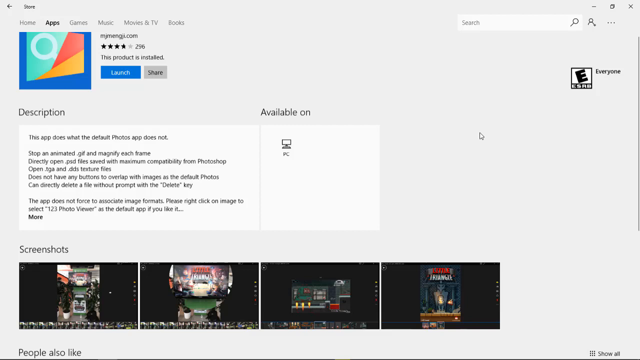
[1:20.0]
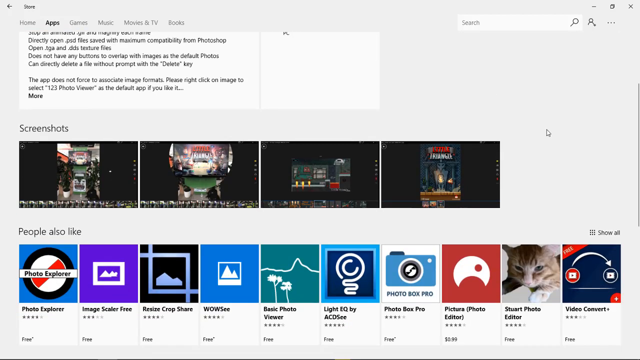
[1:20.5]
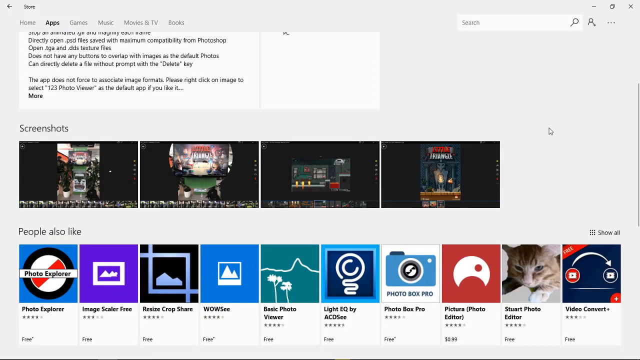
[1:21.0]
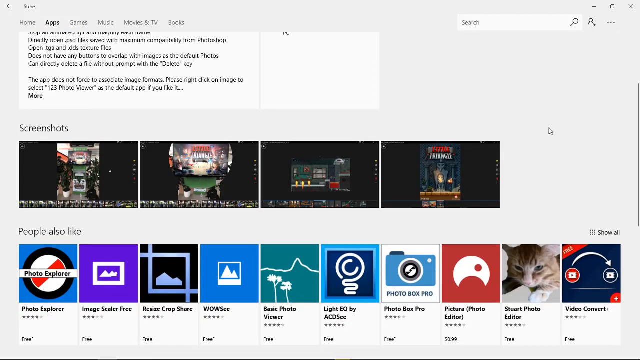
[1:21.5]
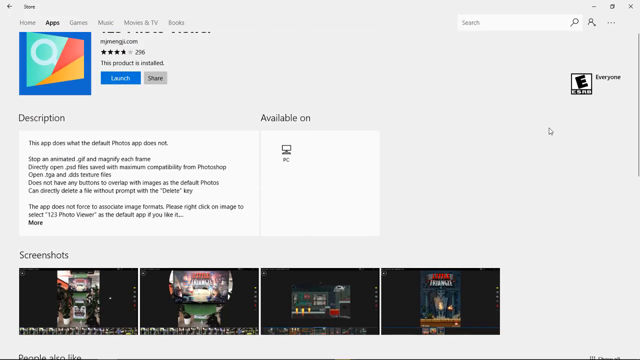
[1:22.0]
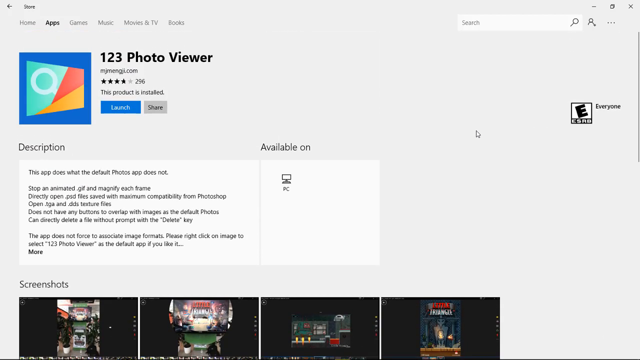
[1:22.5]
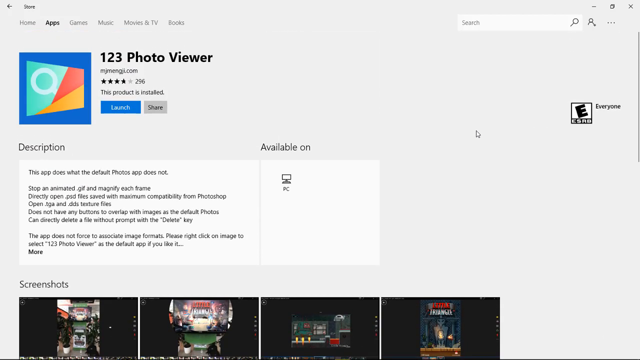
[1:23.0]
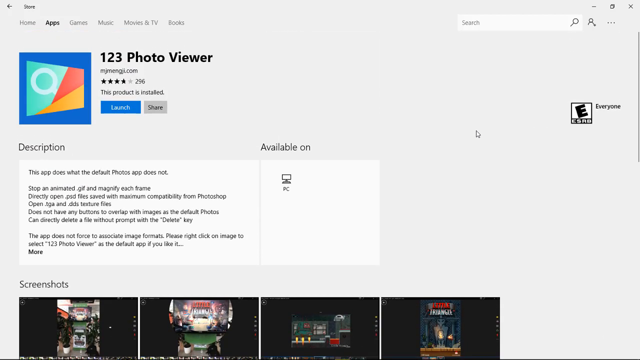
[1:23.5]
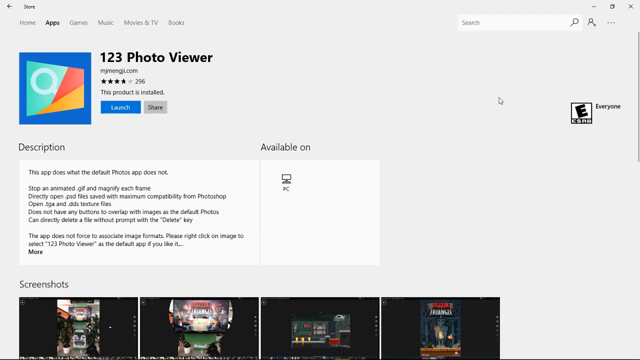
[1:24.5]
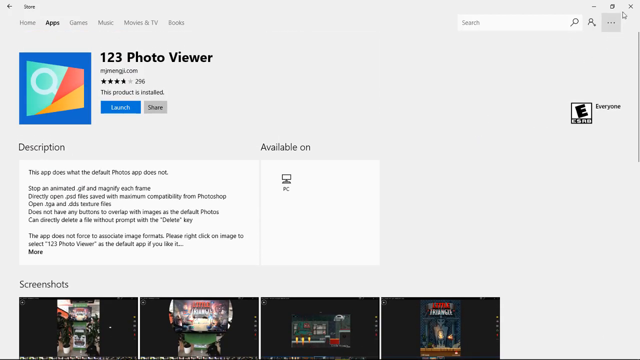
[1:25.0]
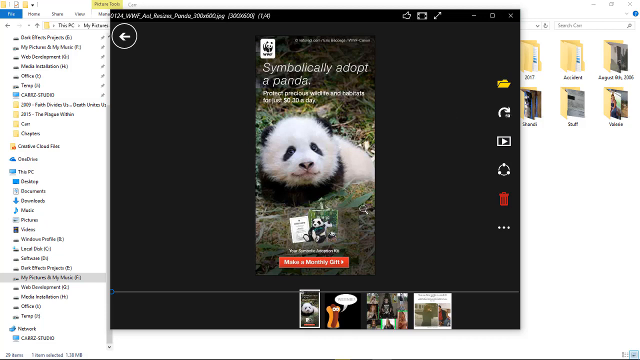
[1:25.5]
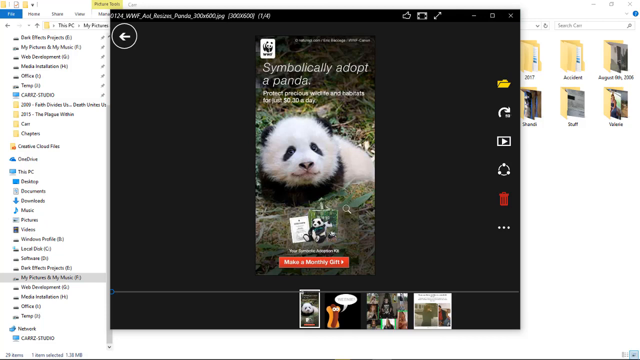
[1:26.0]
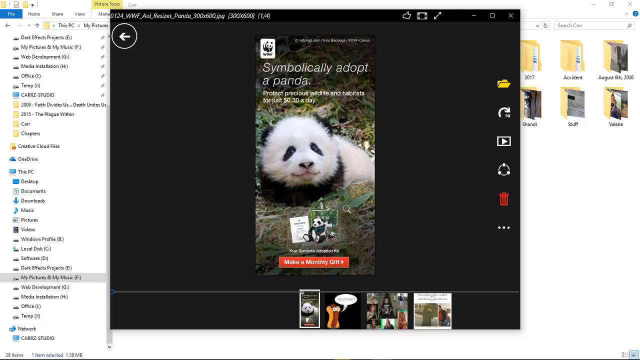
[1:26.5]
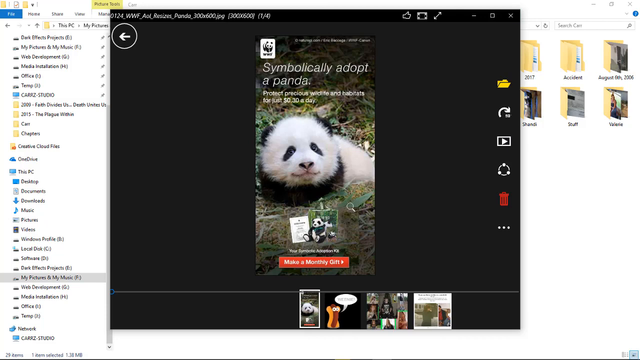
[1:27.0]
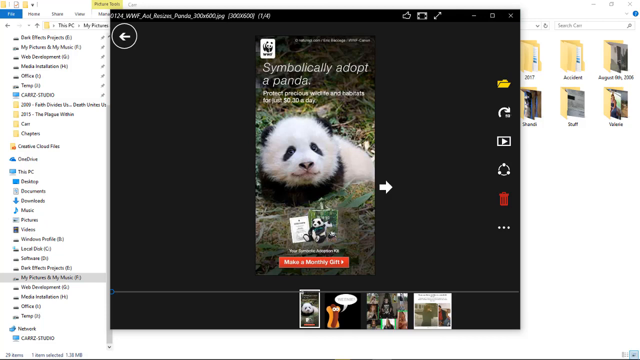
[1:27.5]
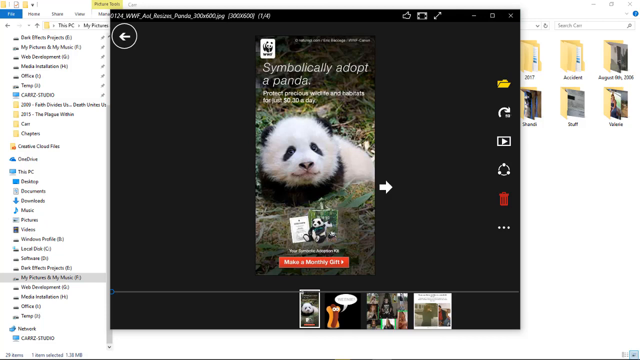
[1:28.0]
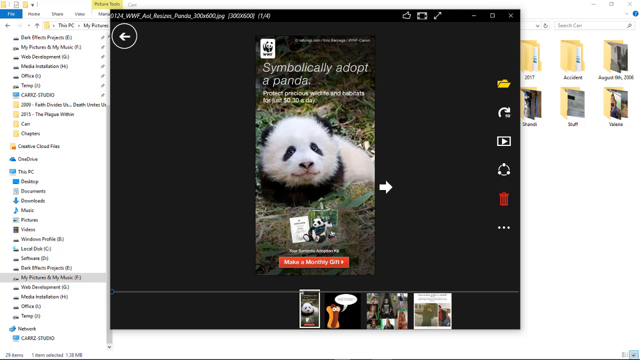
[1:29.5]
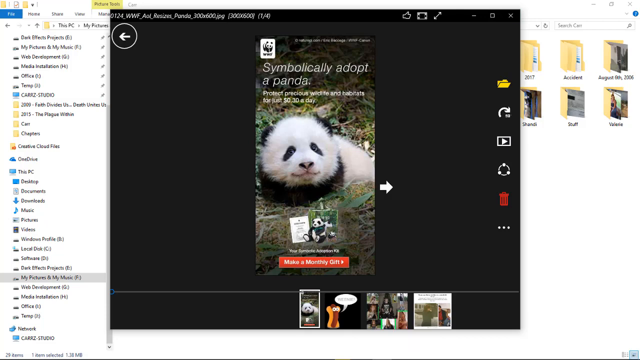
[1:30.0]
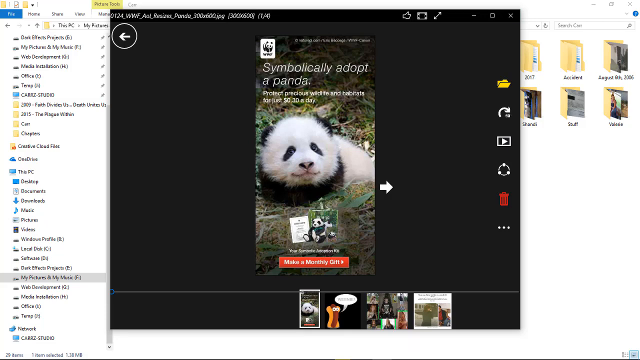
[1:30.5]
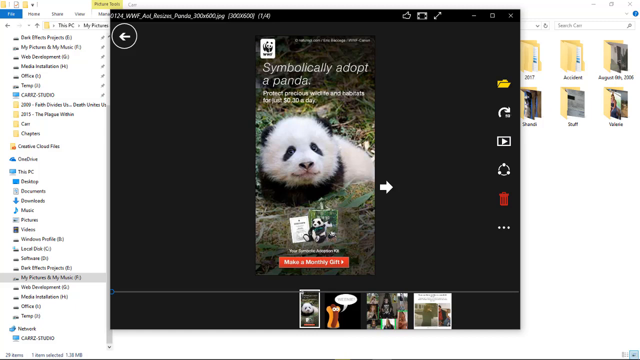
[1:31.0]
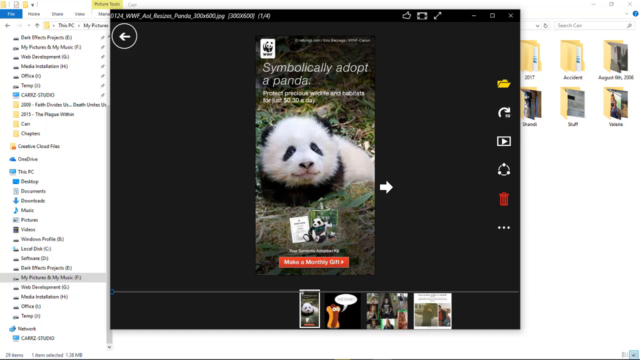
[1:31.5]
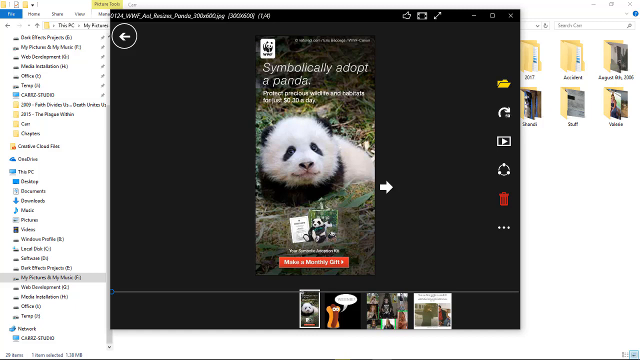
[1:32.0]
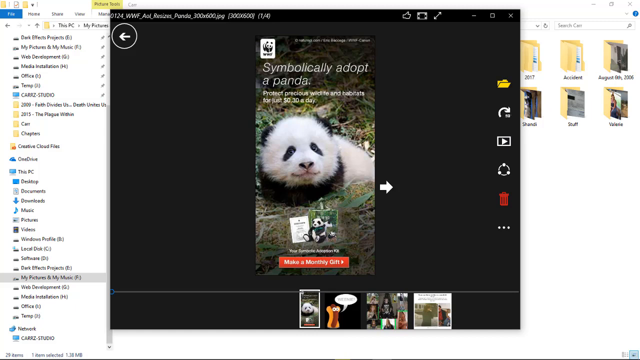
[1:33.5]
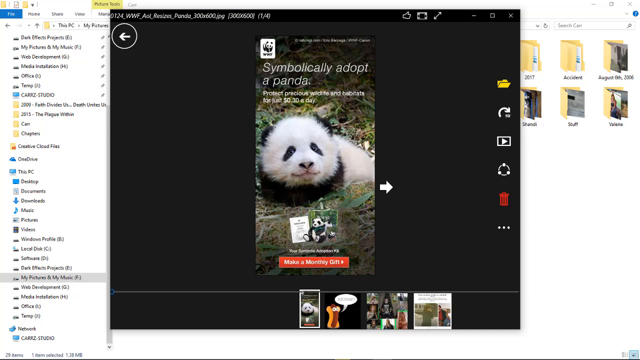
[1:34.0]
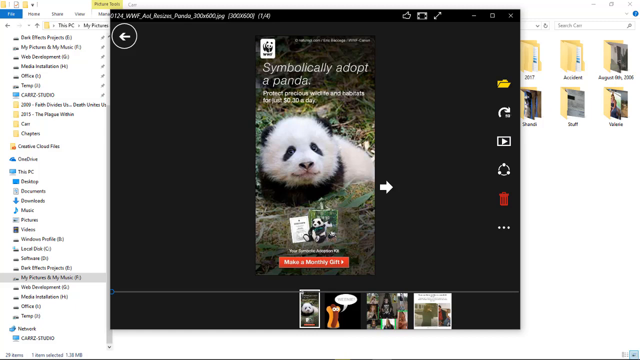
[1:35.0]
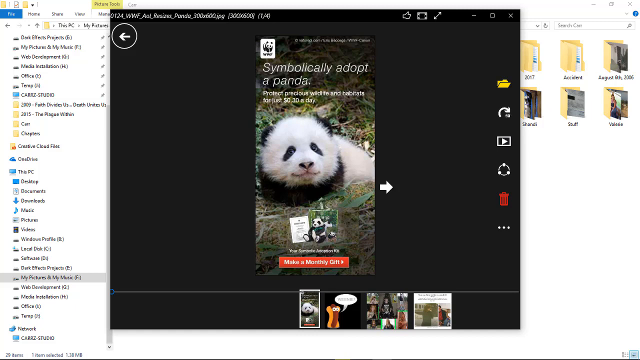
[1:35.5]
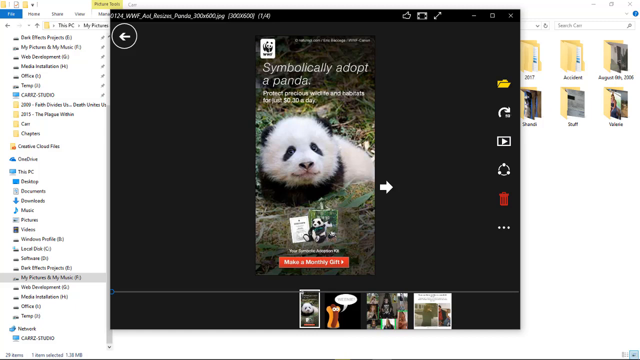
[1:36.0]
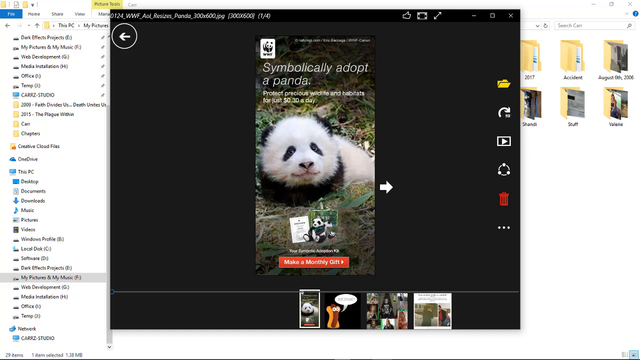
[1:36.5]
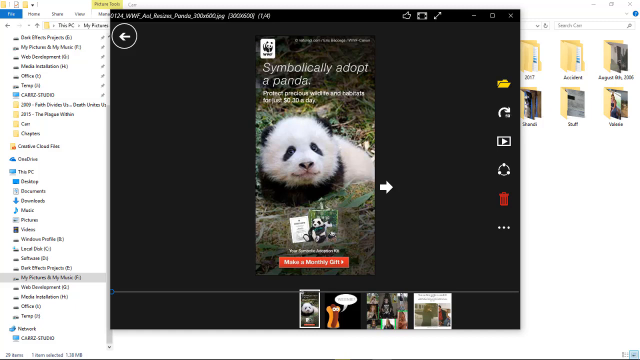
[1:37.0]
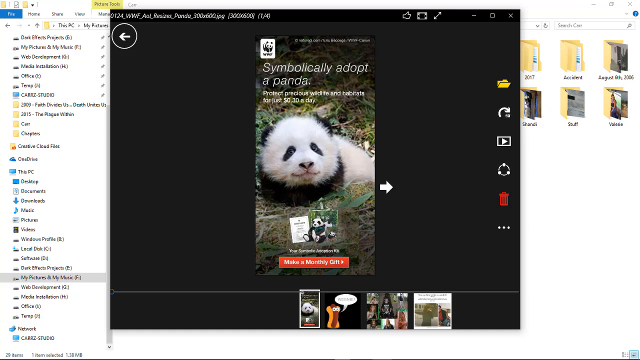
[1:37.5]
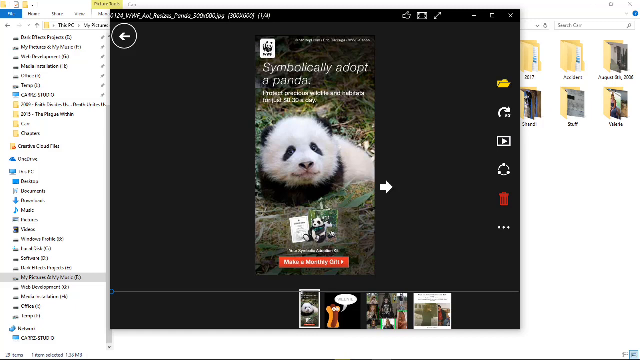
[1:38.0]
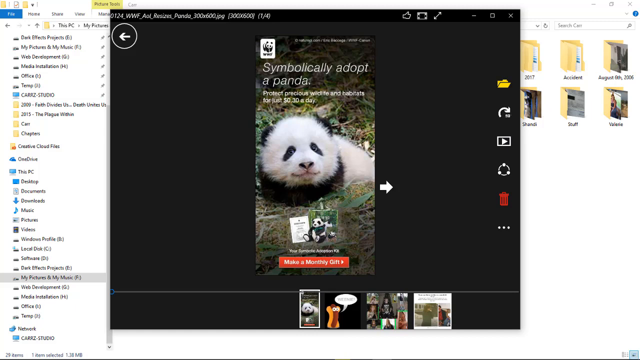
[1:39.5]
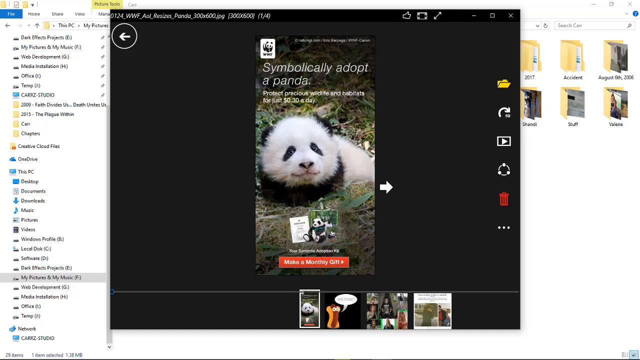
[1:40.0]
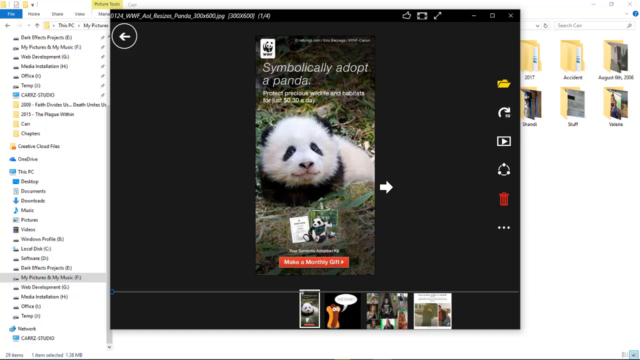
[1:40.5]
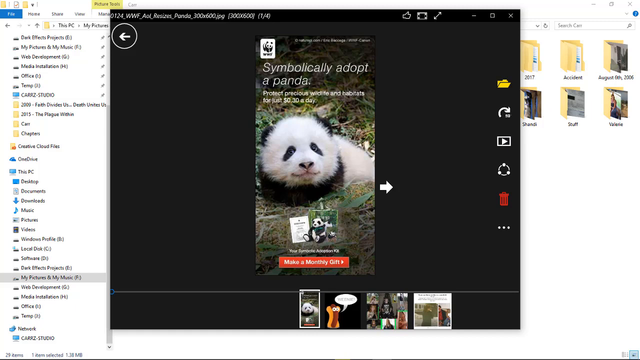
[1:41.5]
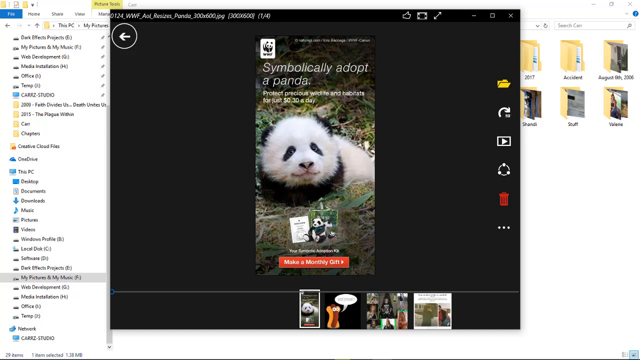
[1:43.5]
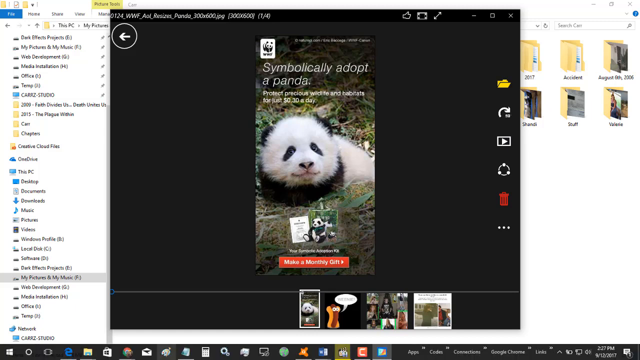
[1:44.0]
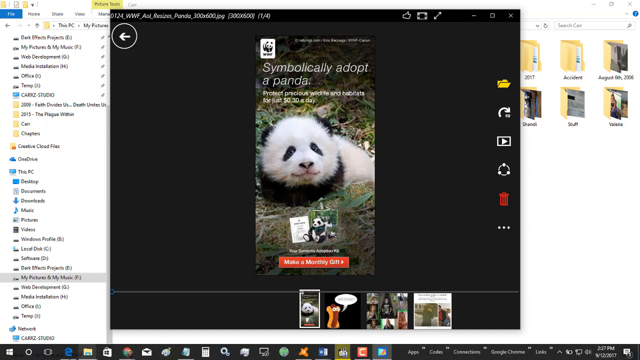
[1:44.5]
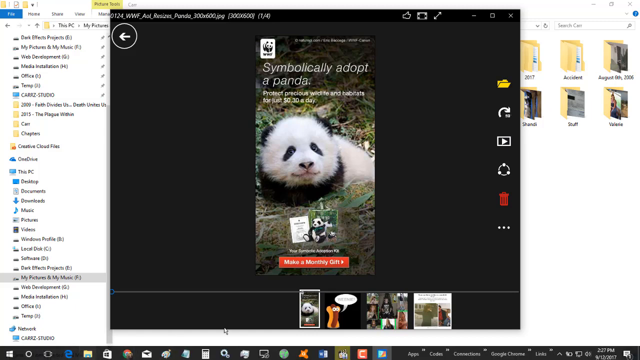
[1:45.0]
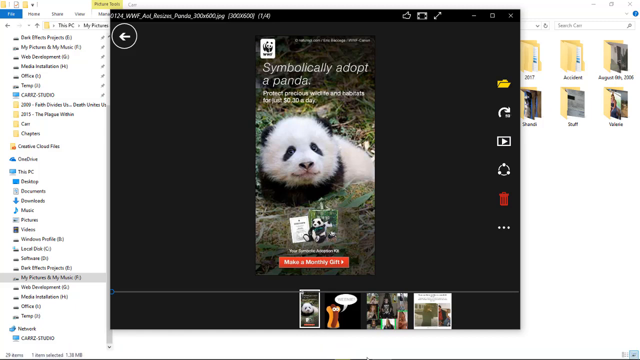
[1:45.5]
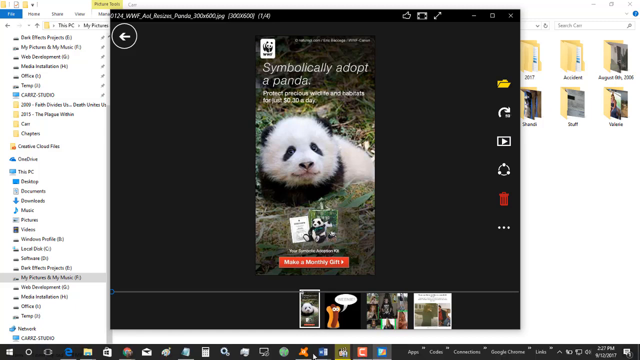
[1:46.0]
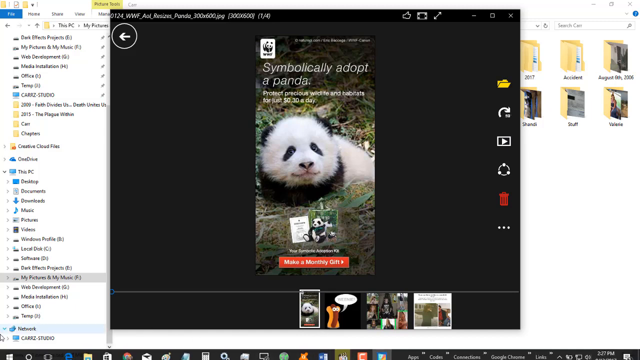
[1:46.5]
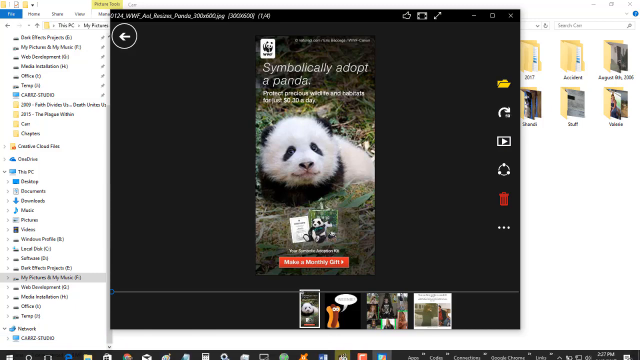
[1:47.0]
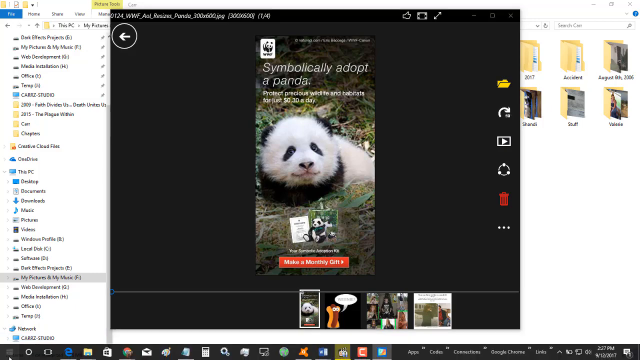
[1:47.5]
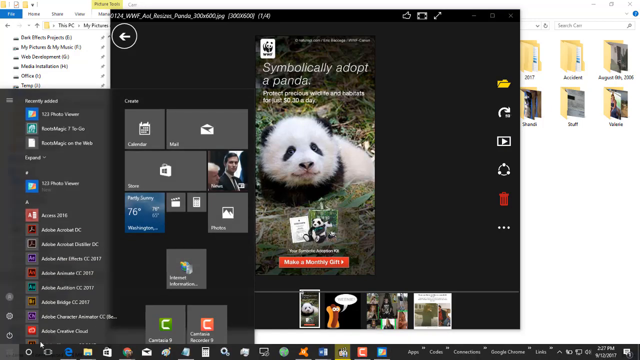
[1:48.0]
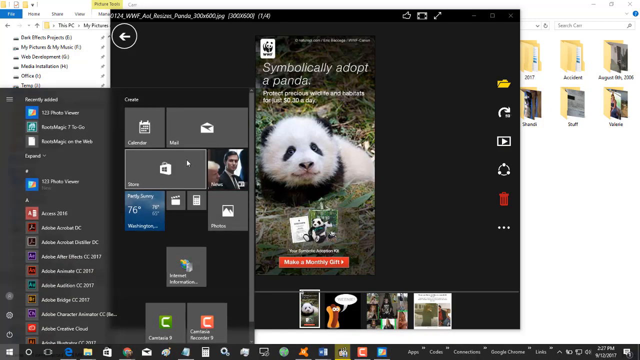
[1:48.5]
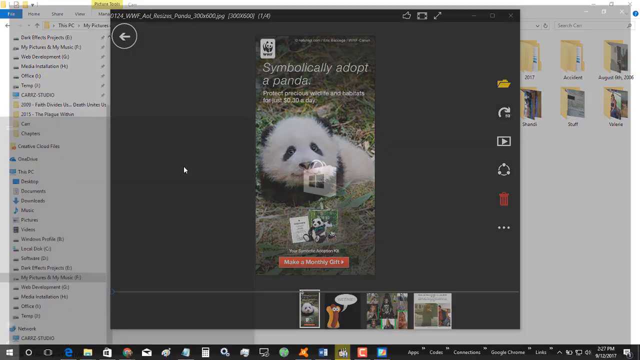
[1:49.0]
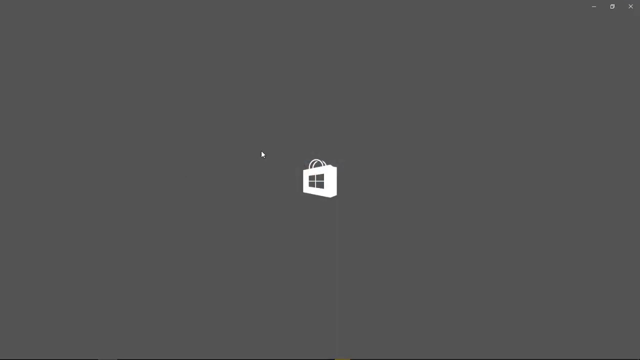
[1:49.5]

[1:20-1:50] On a webpage, the person scrolls down, revealing a bunch of screenshots, and then scrolls back up. In the top left corner is a logo with many different colors: the background is blue, and in the forefront is something like a card shaped like a rectangle, with three colors, light blue, red and a somewhat yellow-orange. On the right side, text says "one two three photo viewer". The person then navigates to a different window showing a picture of a panda, with white text above the panda that says "symbolically adopt a panda". Underneath are thumbnails of other pictures in the window.